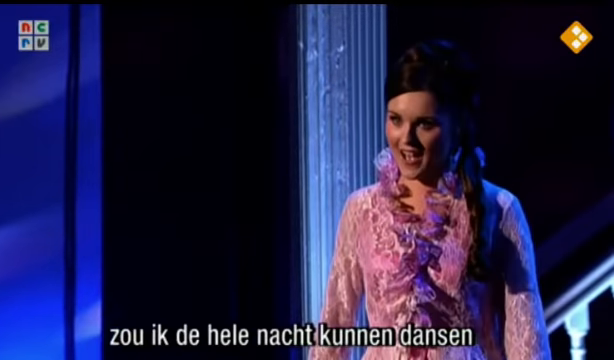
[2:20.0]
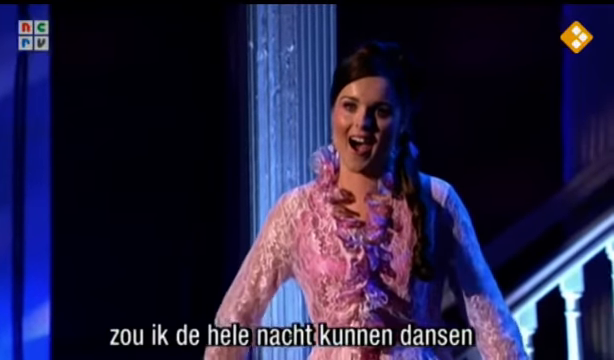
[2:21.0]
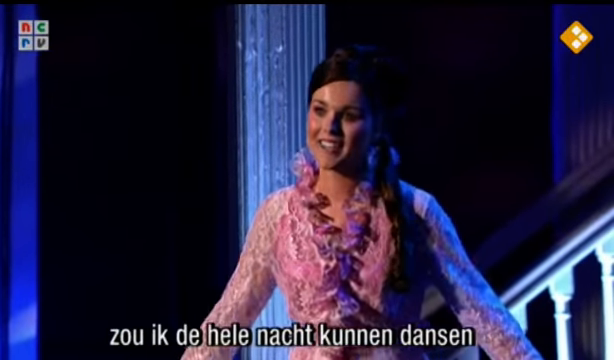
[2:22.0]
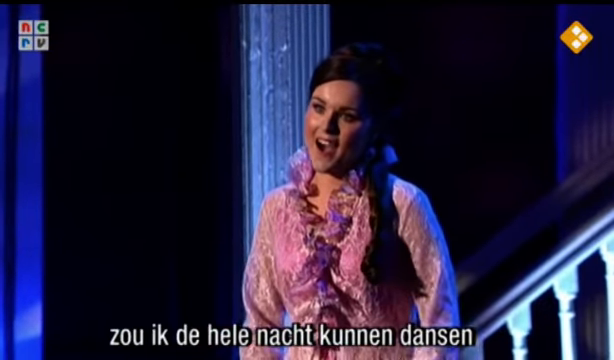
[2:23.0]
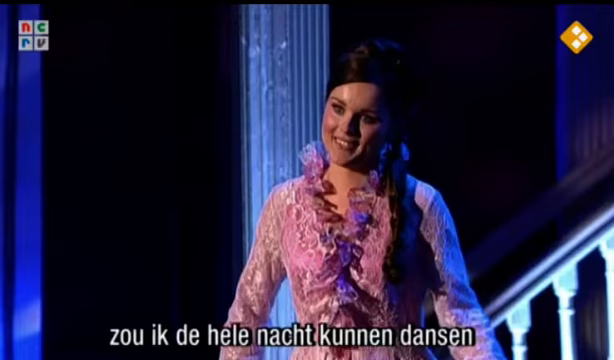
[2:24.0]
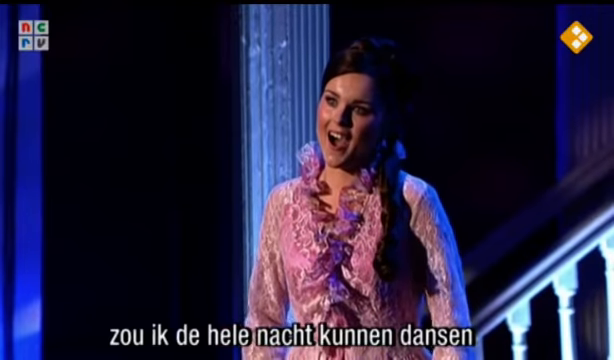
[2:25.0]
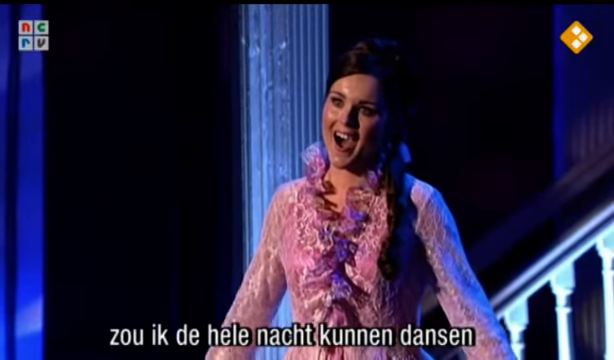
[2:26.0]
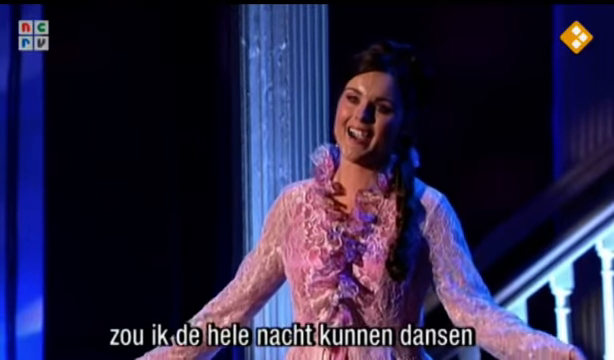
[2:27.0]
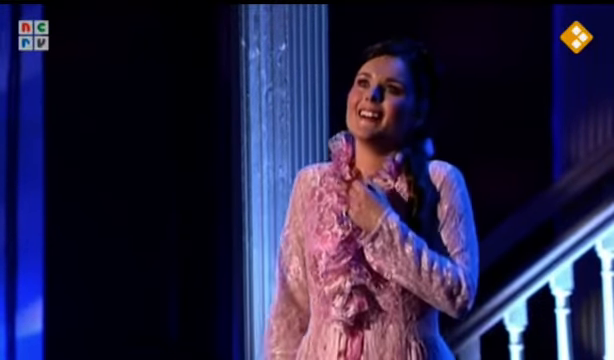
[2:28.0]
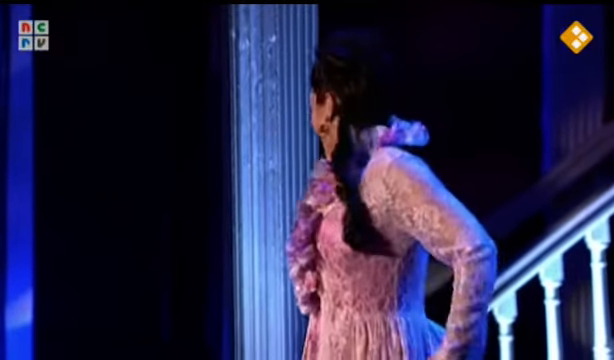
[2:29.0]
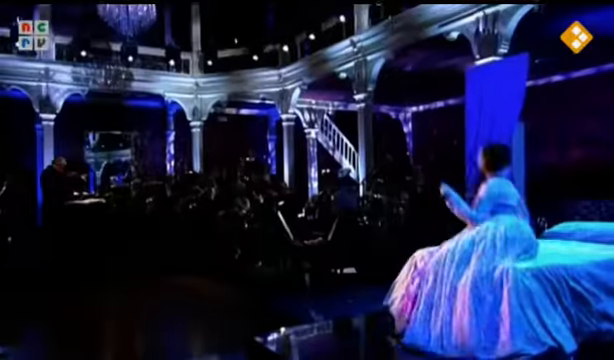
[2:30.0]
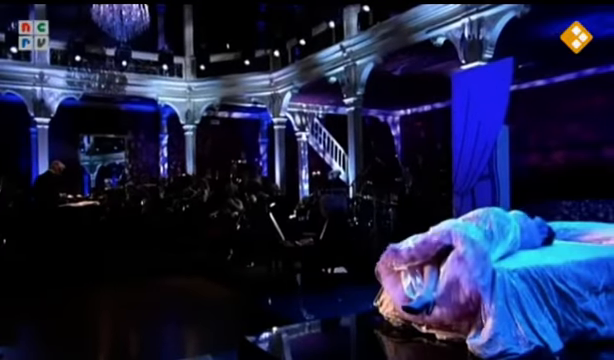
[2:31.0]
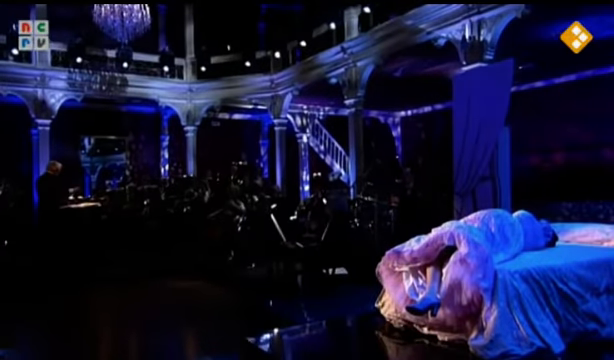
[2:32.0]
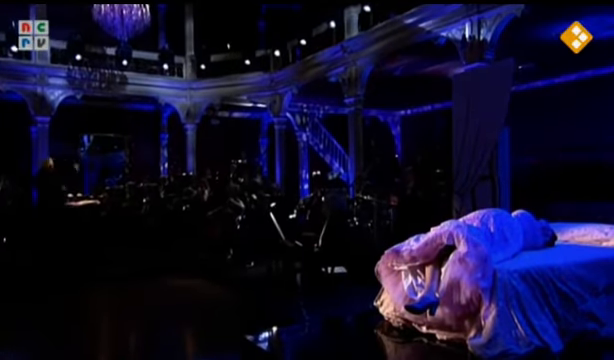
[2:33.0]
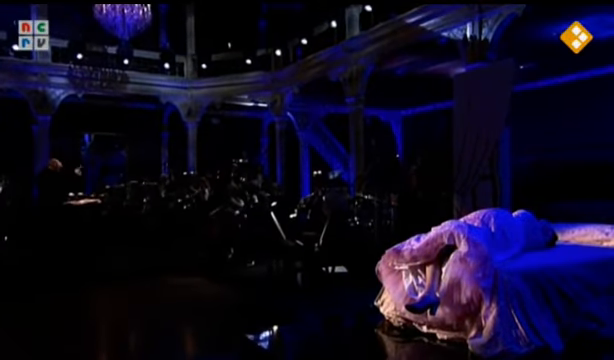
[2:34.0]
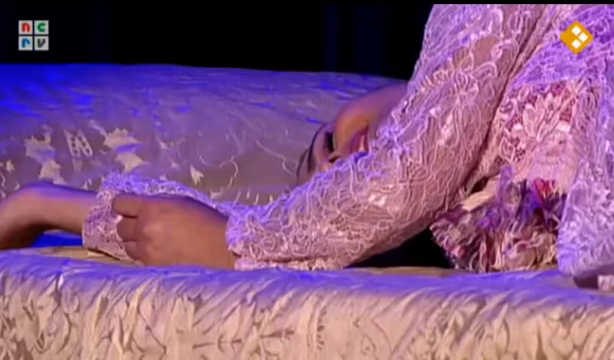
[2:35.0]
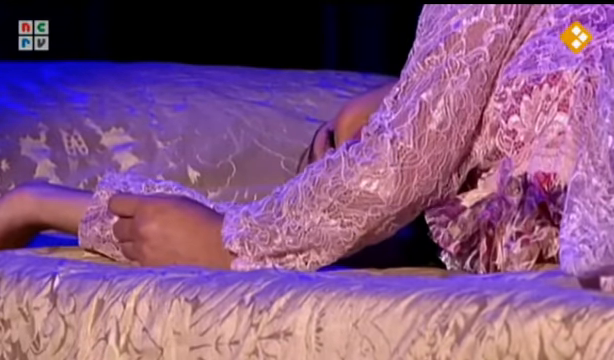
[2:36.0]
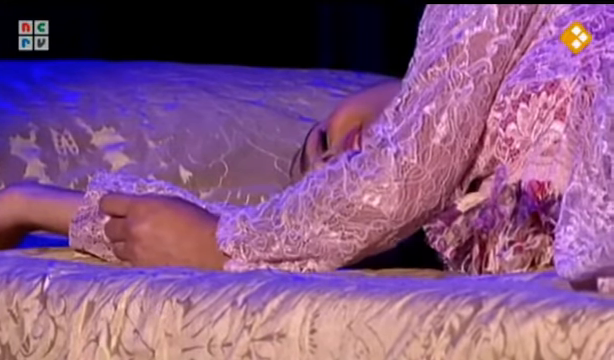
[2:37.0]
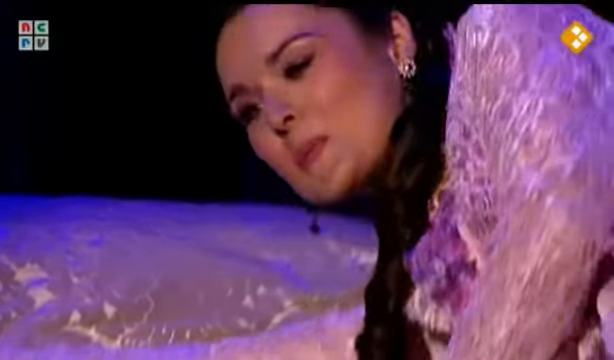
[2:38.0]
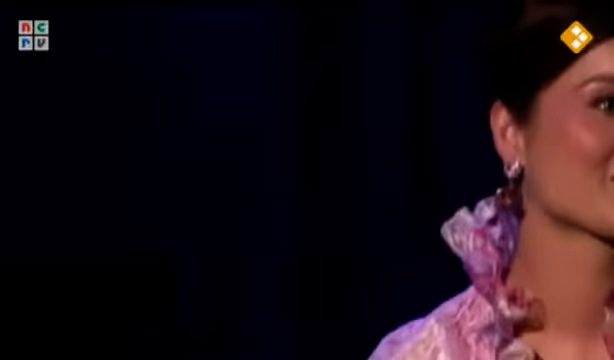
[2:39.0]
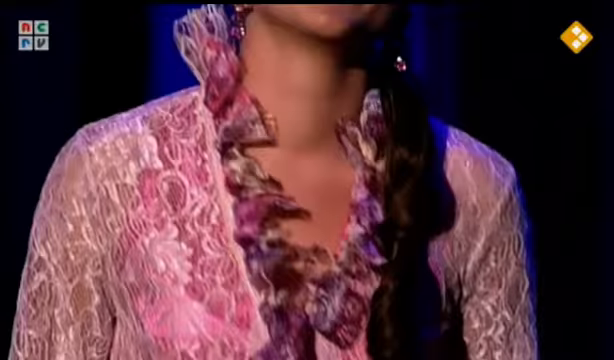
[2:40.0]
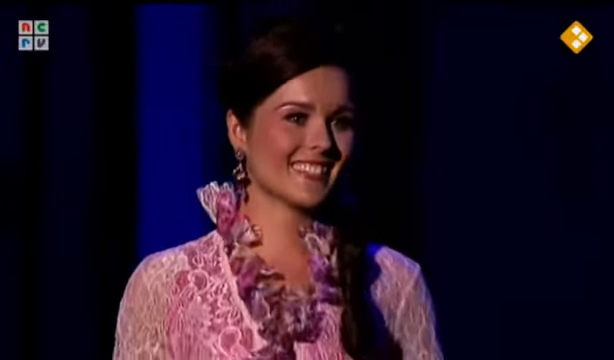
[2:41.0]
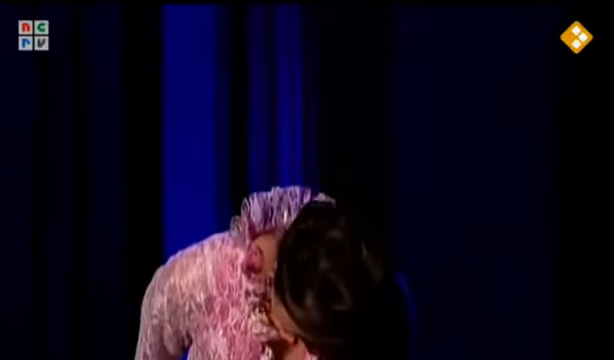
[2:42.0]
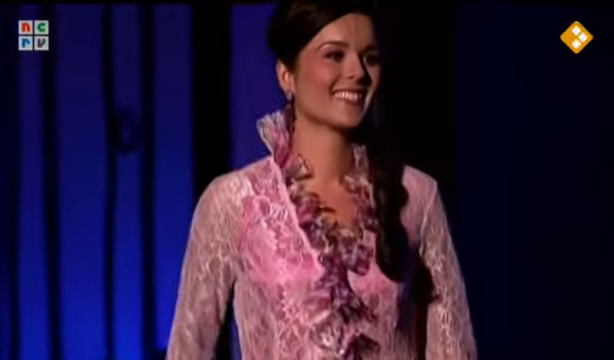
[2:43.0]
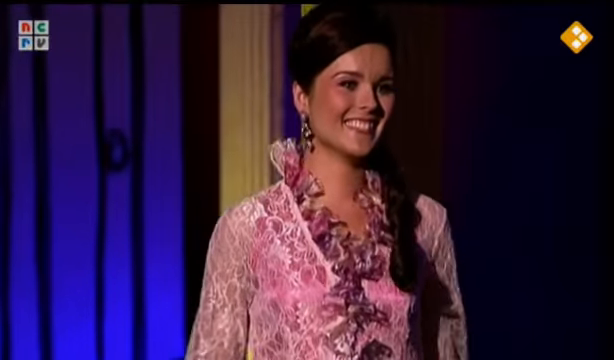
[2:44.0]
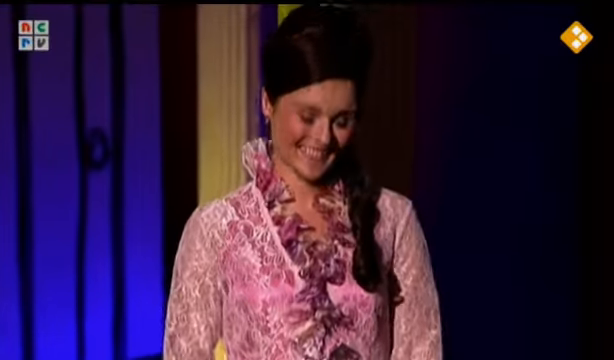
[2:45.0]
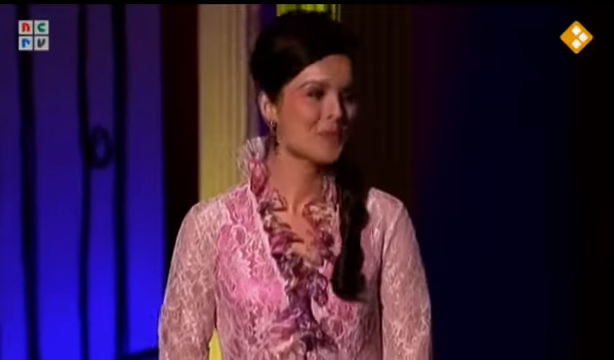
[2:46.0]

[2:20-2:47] The singer opens her mouth very wide and raises her arms, so it looks like she is singing very loudly and holding a long note. She does a few of these long notes, then takes a deep breath, puts her fist in front of her chest, and gazes upward with a very dreamy, positive look. She turns her head and collapses onto the bed, the bottom of her legs and her heels sticking off the end of the bed beneath her fluffy pink dress. The lights dim a little, and a maestro off to the side directs the band and orchestra. A close-up shows the singer's face as she lies on the bed, looking as if she is sleeping. She takes a big breath in, gets up with a large smile, and bows toward the audience a few times.